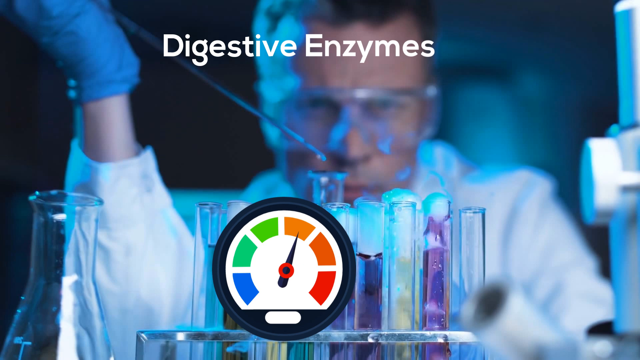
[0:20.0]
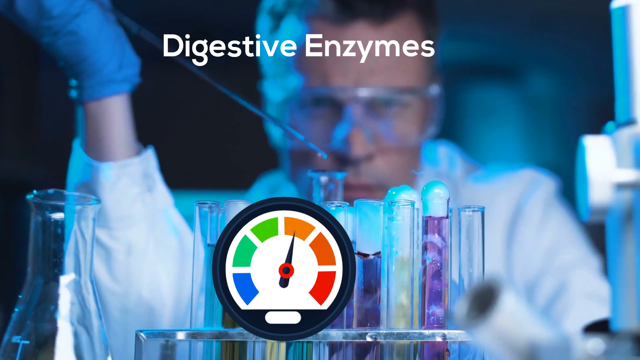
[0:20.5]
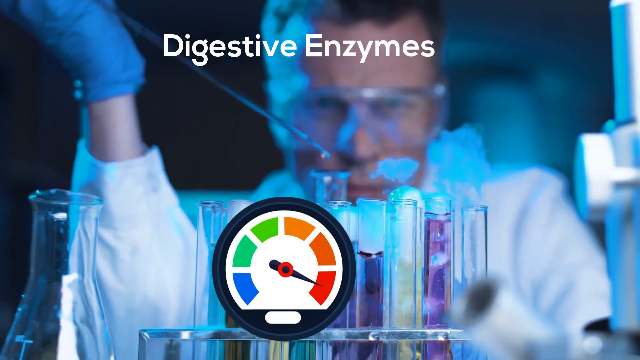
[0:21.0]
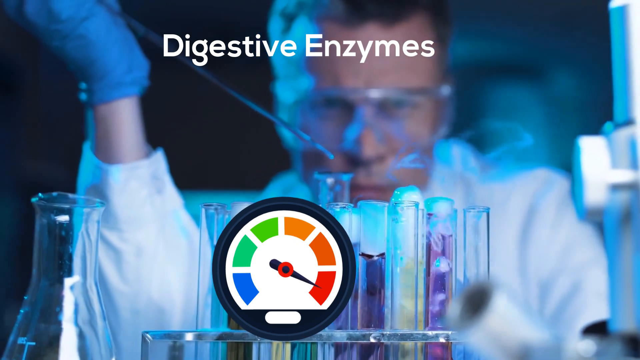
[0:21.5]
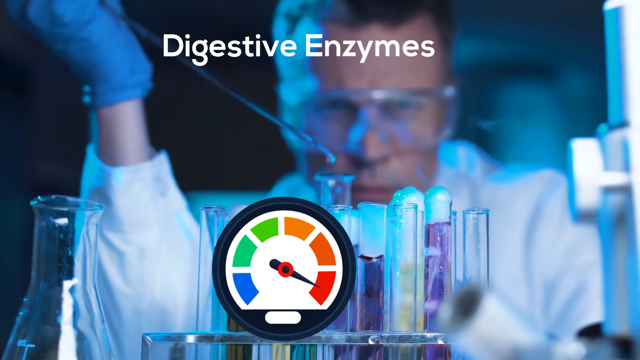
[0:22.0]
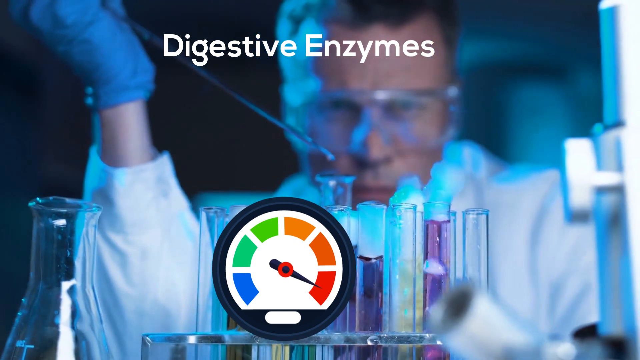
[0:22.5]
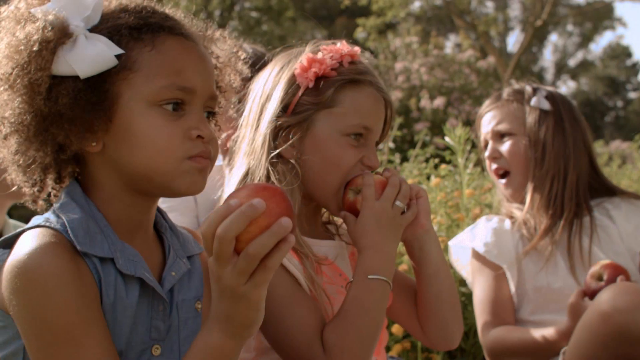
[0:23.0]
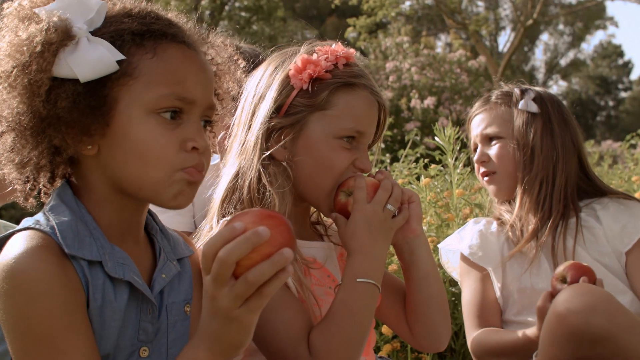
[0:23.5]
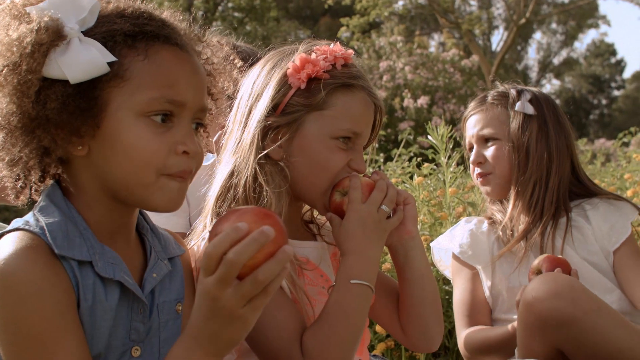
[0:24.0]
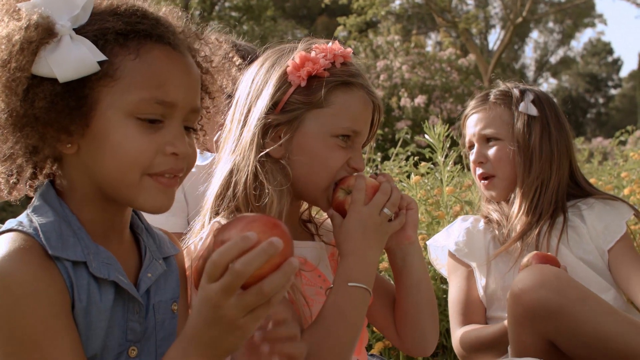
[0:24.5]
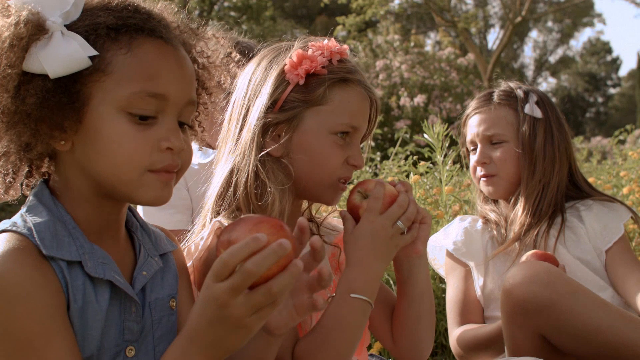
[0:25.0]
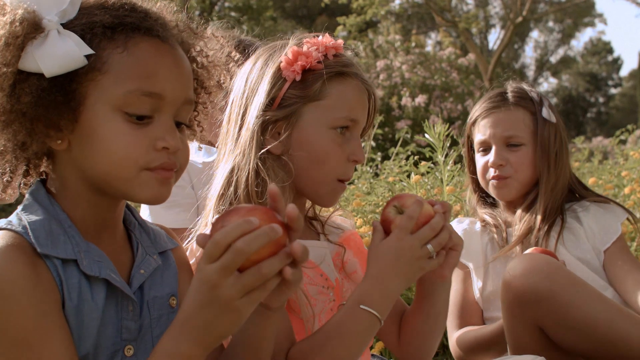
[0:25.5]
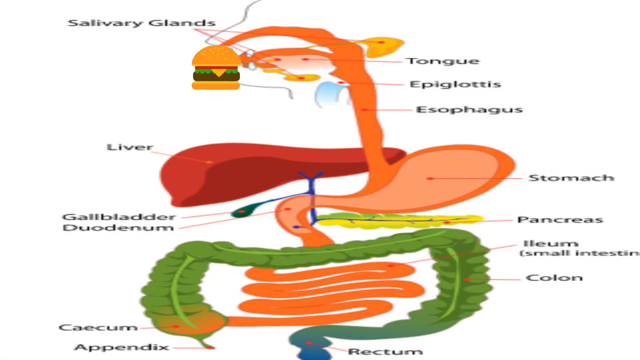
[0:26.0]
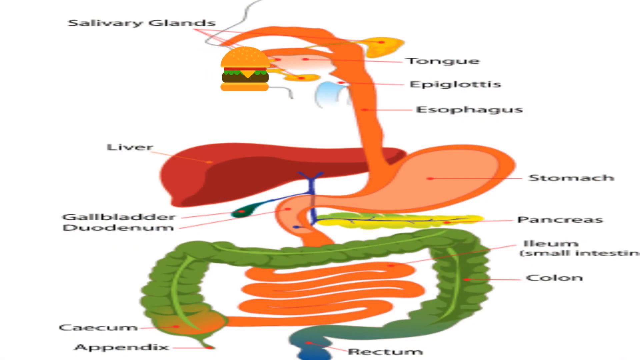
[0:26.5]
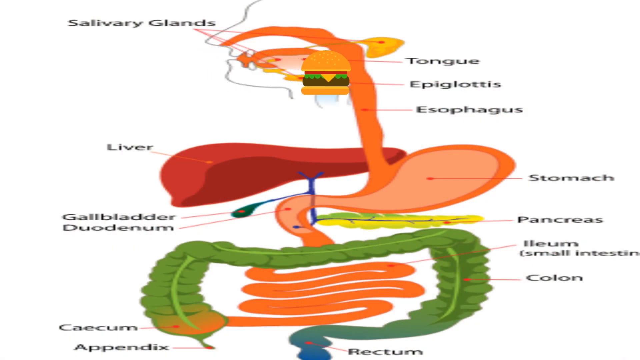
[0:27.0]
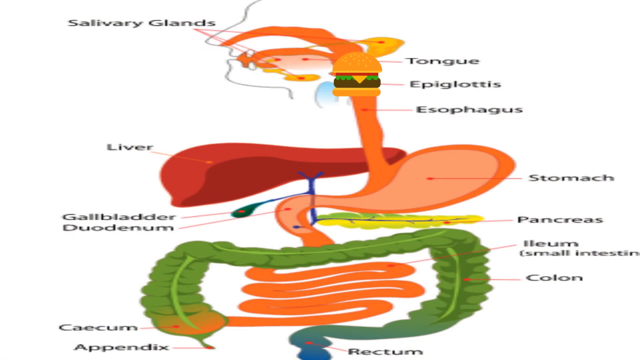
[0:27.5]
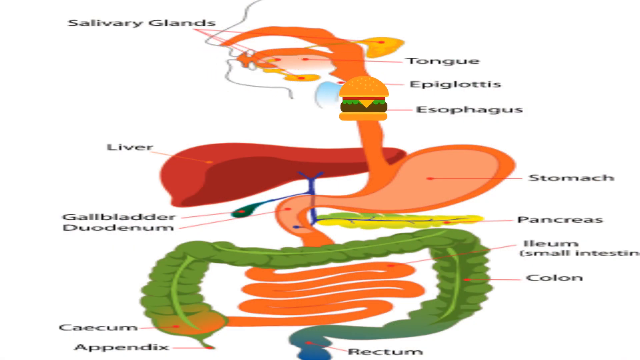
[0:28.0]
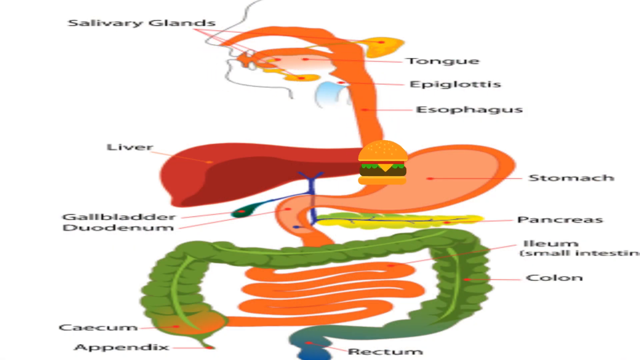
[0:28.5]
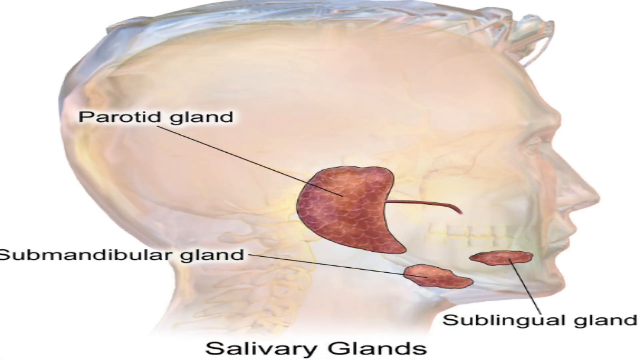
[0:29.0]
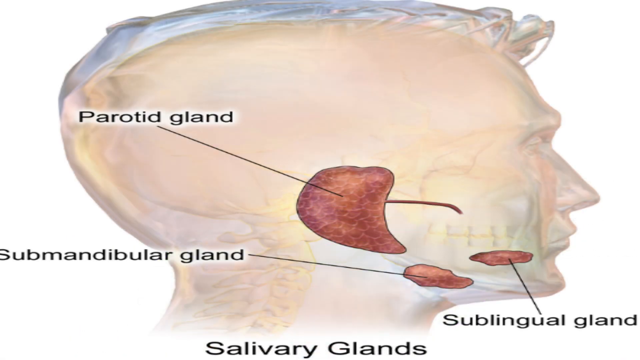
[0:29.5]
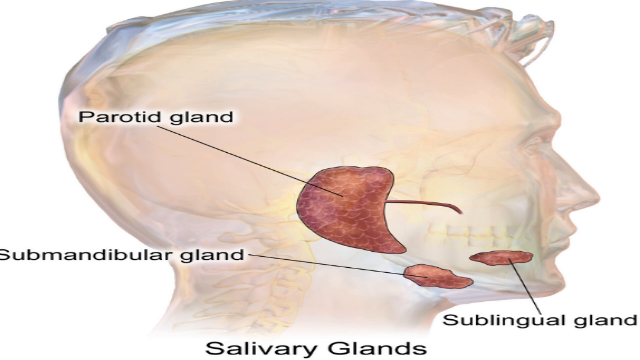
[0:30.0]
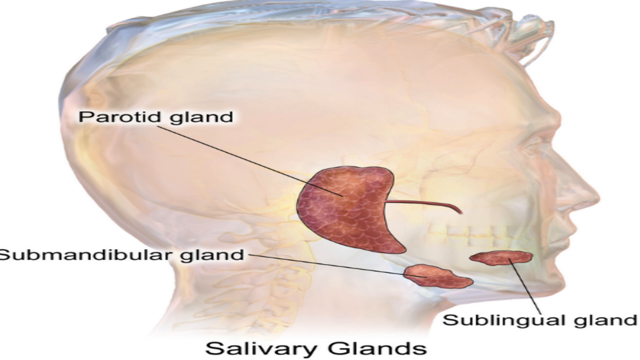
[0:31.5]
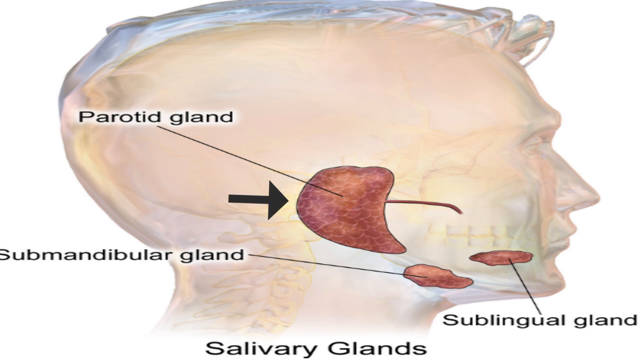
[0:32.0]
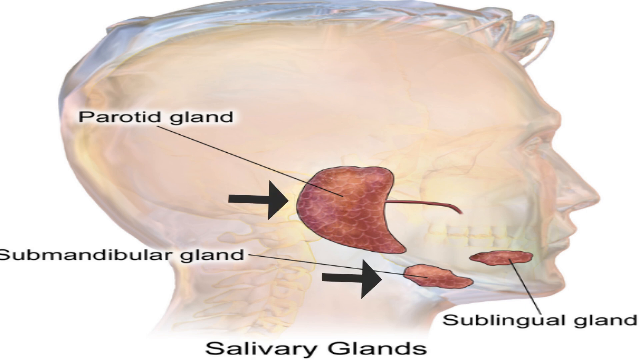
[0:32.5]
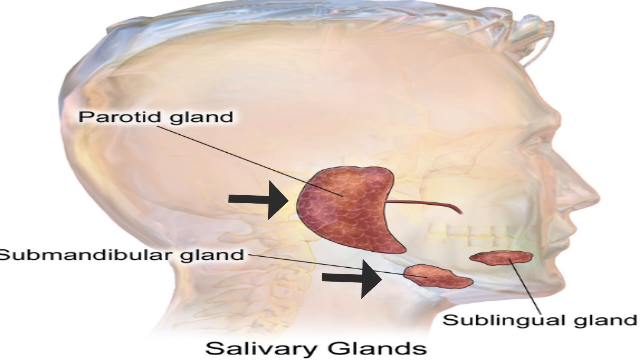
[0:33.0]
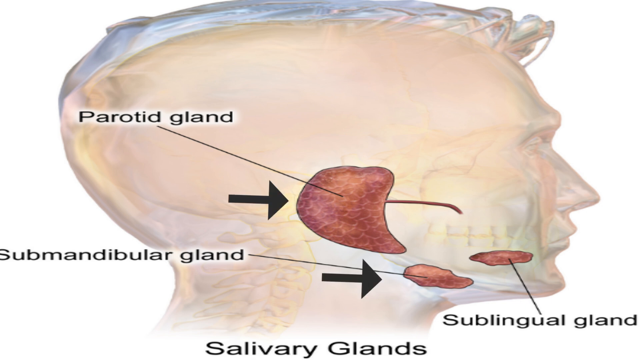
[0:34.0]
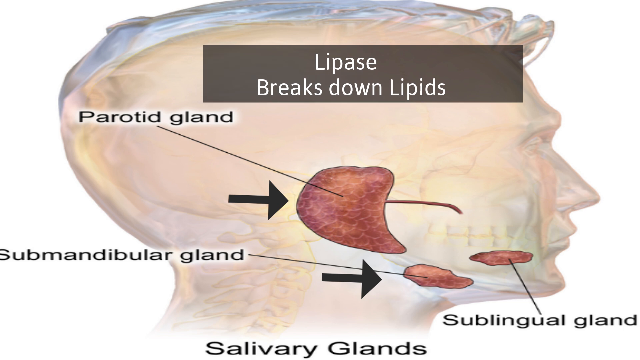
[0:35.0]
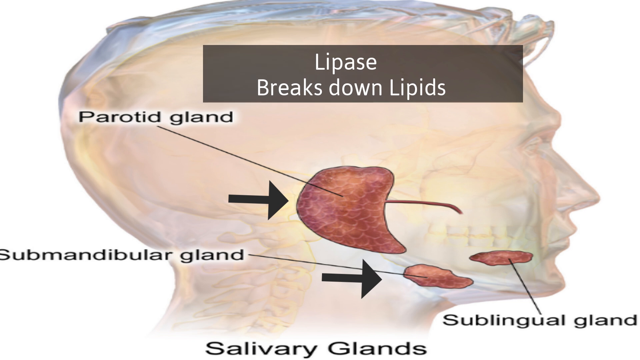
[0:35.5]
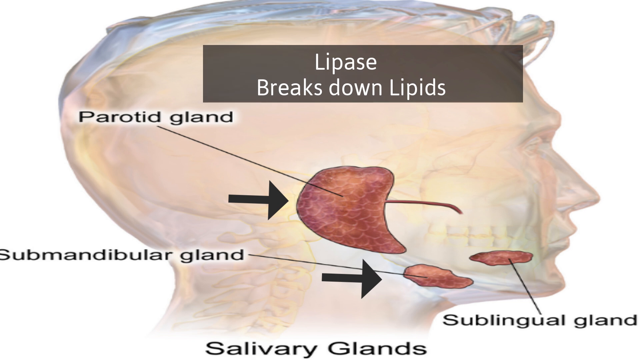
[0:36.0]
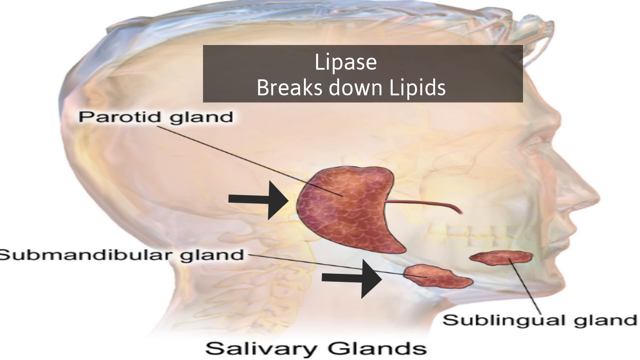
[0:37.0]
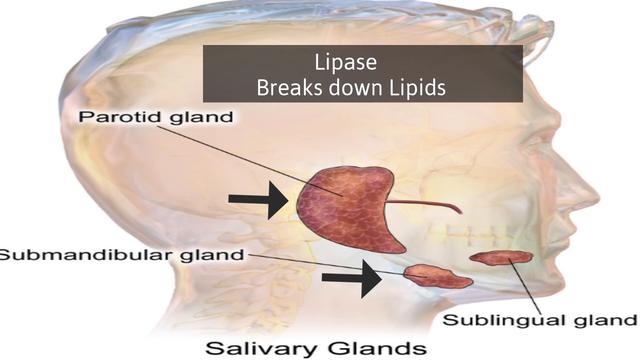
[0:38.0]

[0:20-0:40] Something that looks like a clock, or something that measures, appears. A man in a red coat continues to conduct an experiment. After that, a group of children are eating. A salivary gland structure is shown, depicting food going inside the salivary gland and then down into the stomach and the brain. Text reads "lipos breaks down the lipids", and this part ends on that point.